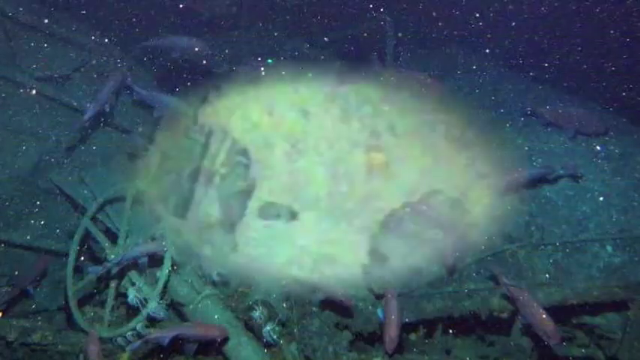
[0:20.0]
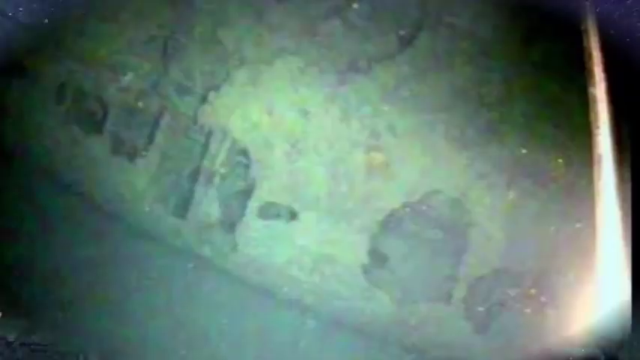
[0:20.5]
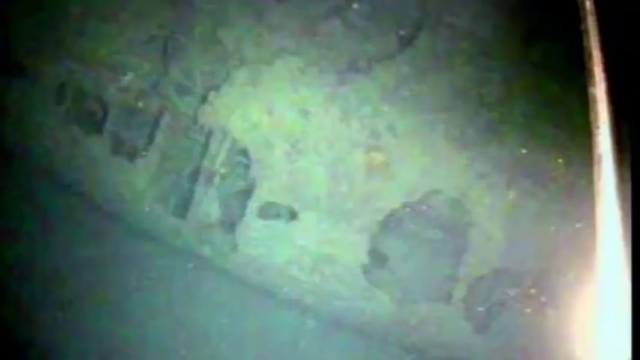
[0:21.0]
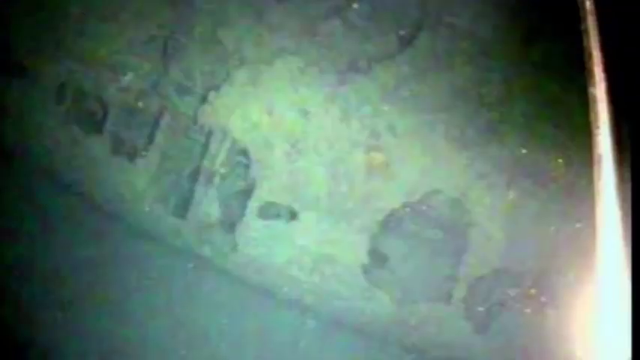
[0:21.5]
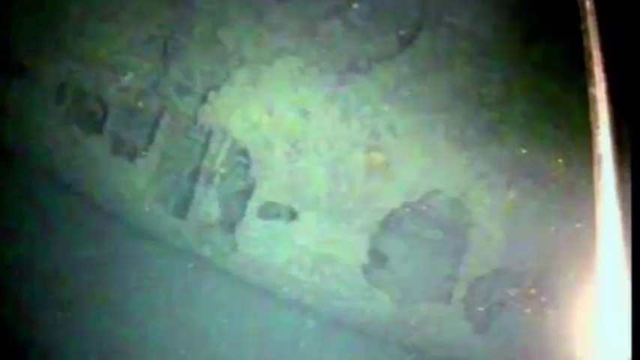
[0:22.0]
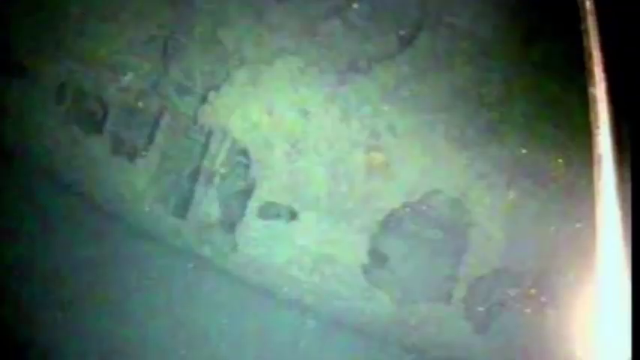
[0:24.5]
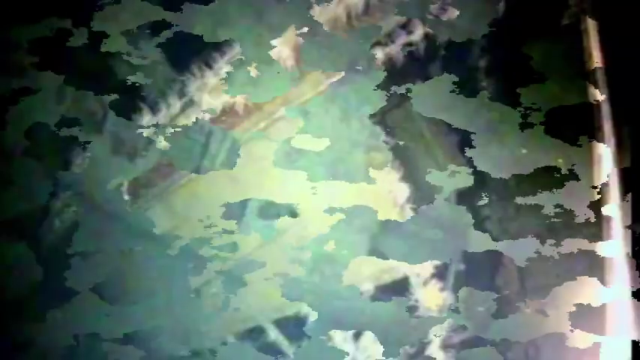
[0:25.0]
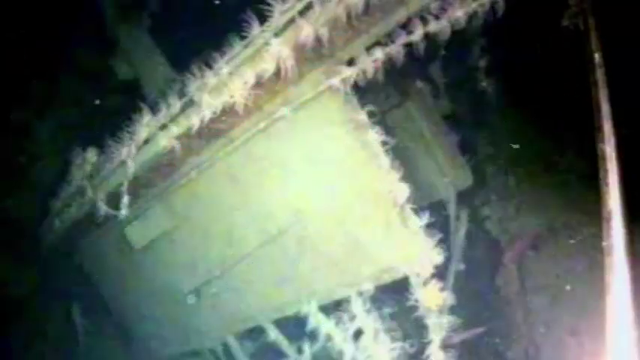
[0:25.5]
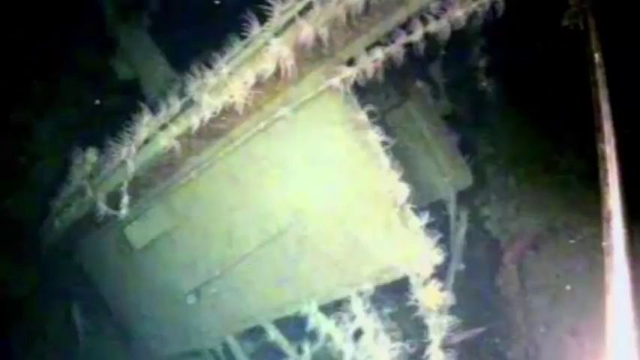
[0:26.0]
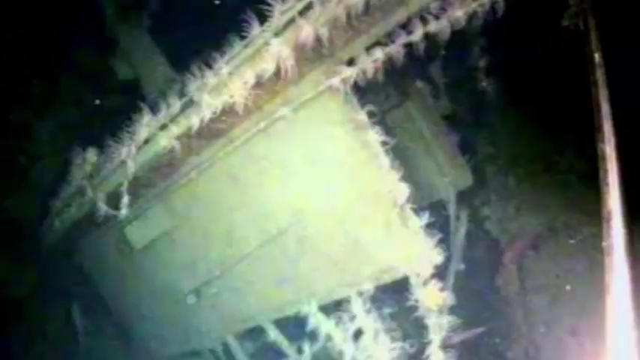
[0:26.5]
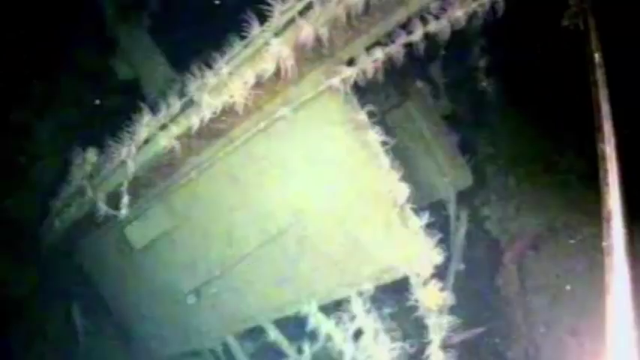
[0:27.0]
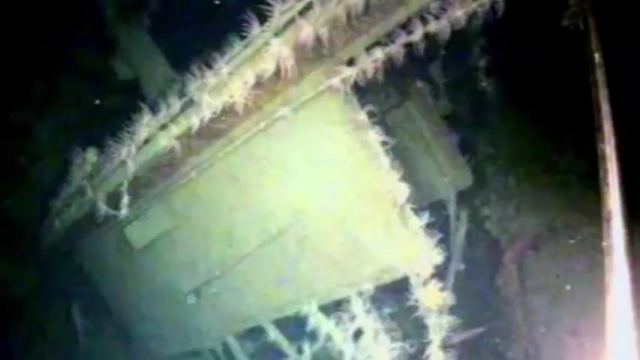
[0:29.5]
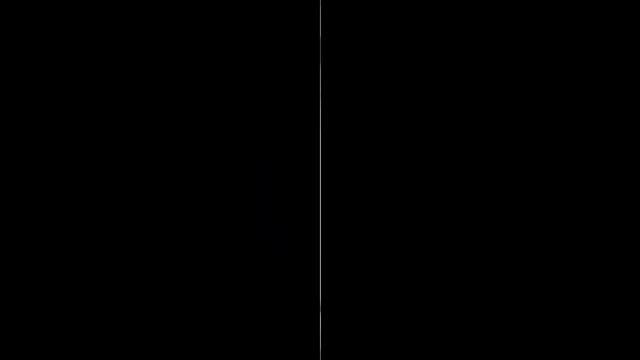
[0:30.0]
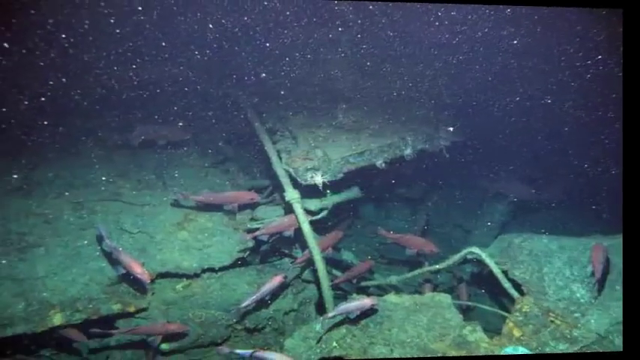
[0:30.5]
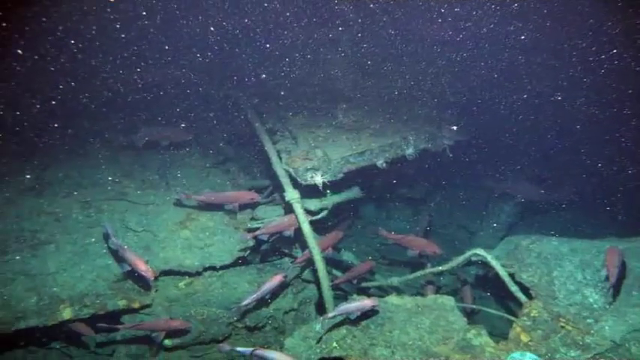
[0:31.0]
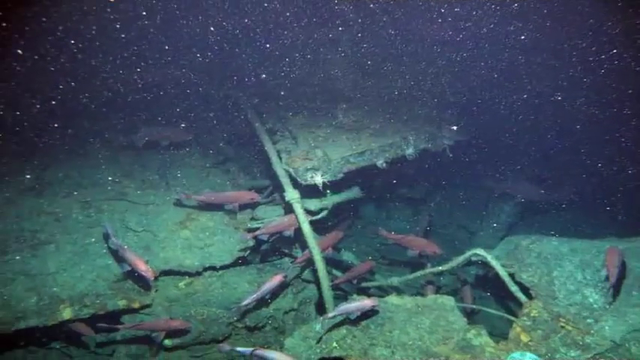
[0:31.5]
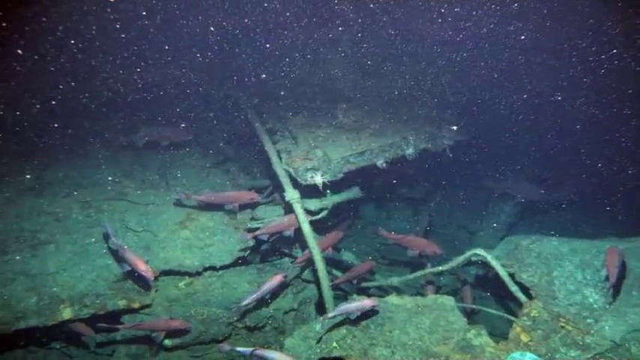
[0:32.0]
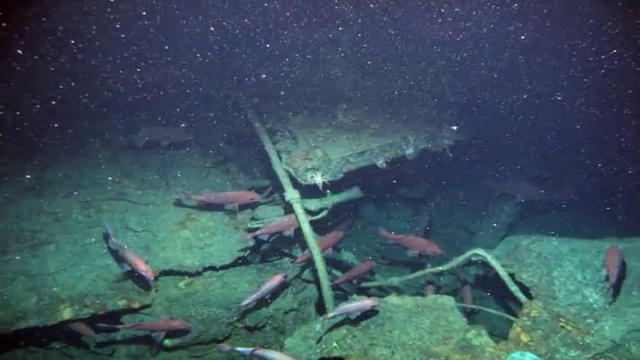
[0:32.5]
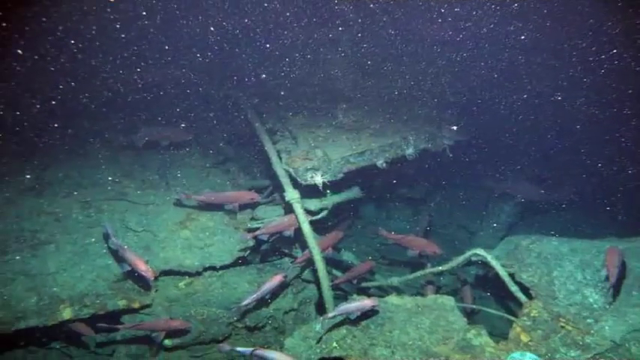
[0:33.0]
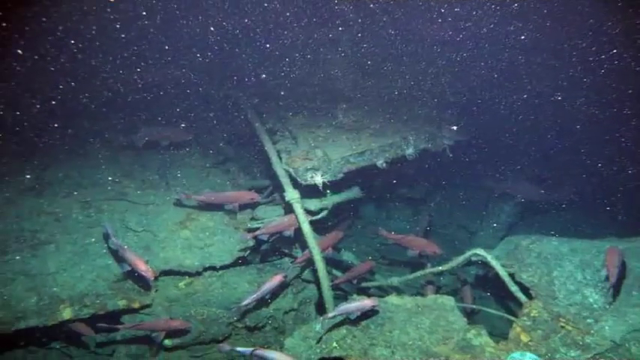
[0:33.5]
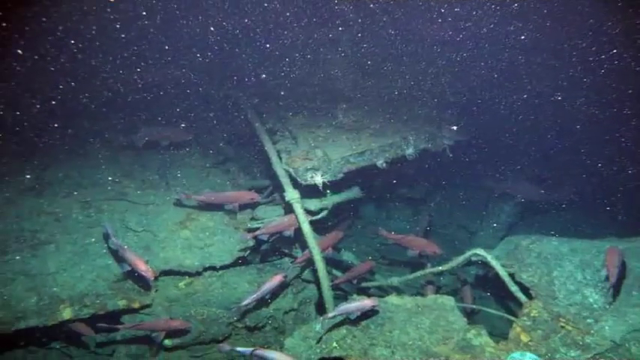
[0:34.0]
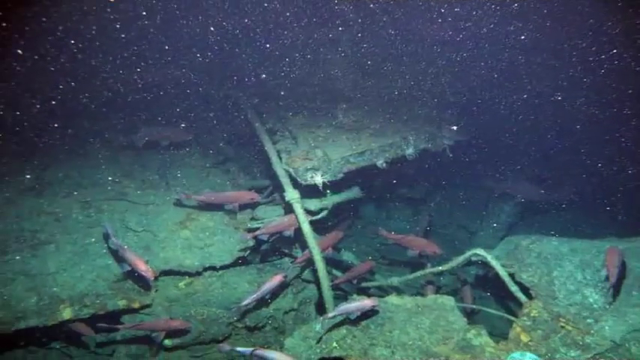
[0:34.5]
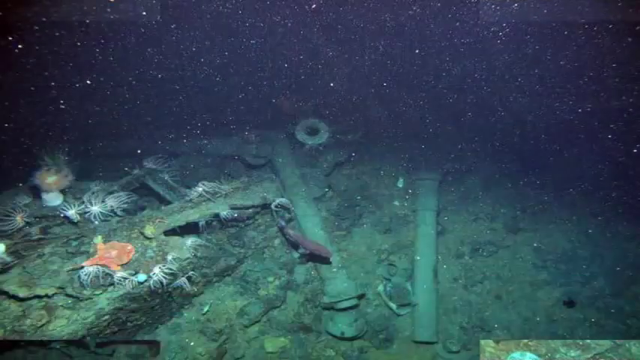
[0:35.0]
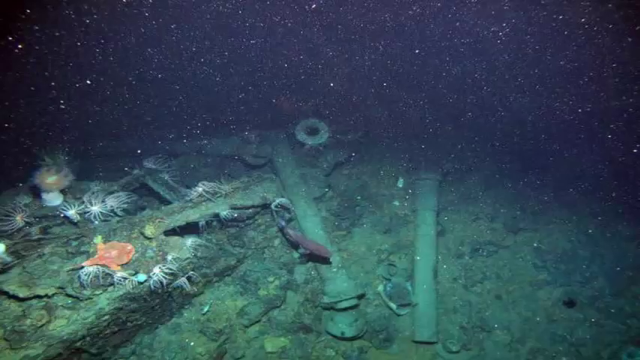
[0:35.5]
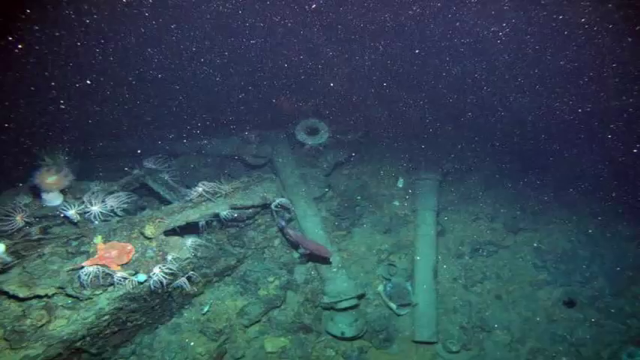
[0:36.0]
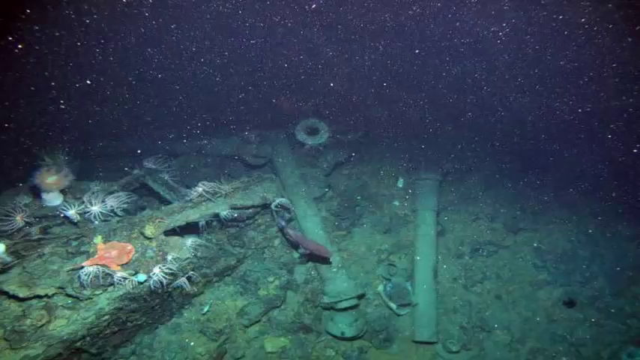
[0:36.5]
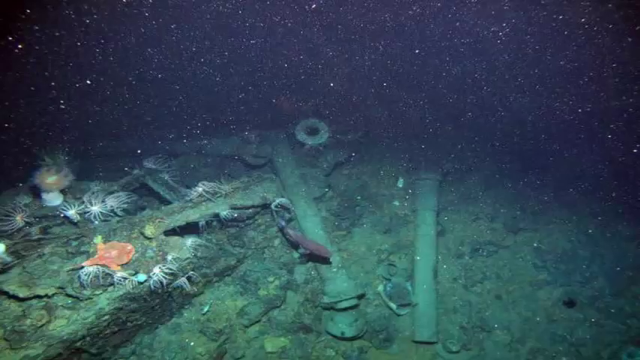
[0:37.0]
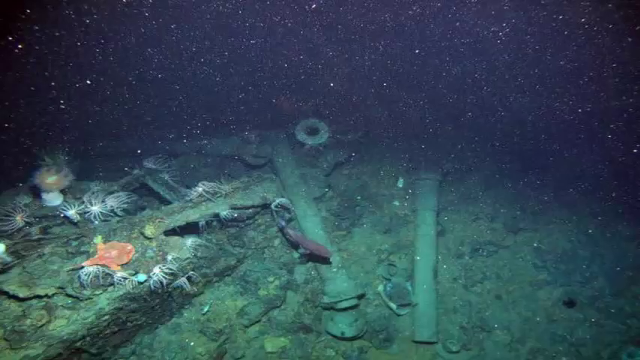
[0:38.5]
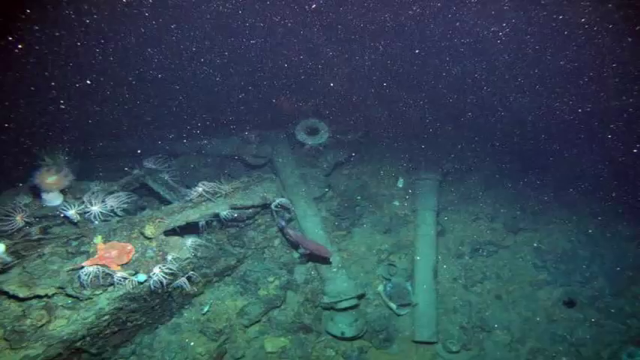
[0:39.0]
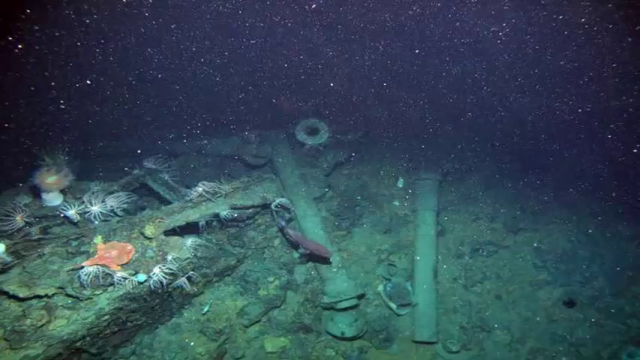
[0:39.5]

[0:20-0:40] A circular animation presents a new image: a large flash of light in the bottom right corner and a very low quality, green-tinted image of a boat wreck under the sea, with vertical lines visible on the wreckage. The screen then transitions to show a box of some sort and some fluffy white growth alongside the boat that seemingly resembles feathers; the background is black, with a green-tinted light illuminating the wreckage. Another transition shows a different image of the wreck, with a pole holding up a flag or something, and lots of red fish swimming around the scene. White dots are again visible all over the screen, possibly due to the low-light photography. The next image shows another angle of the wreckage, with pipes or support cylinders, various fish swimming around, and white, star-shaped growths on the surface that somewhat resemble spiders.